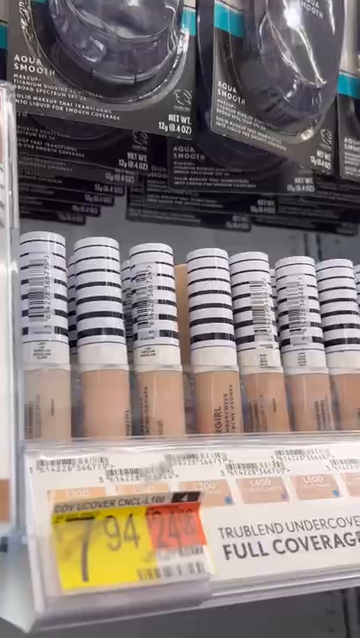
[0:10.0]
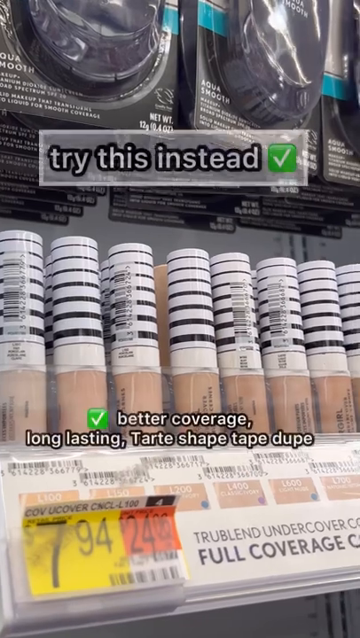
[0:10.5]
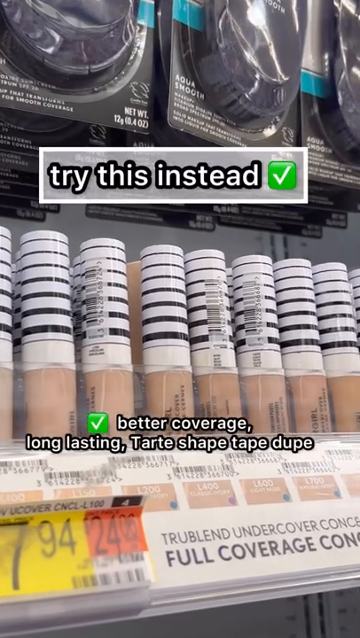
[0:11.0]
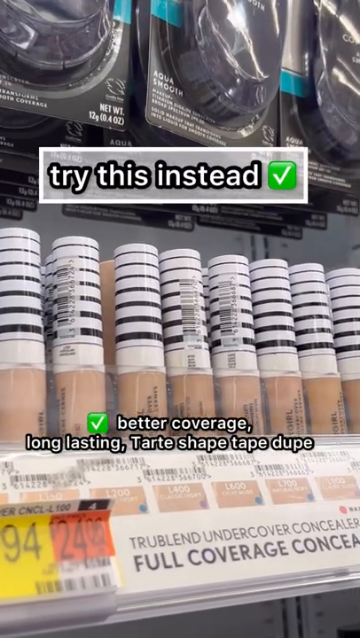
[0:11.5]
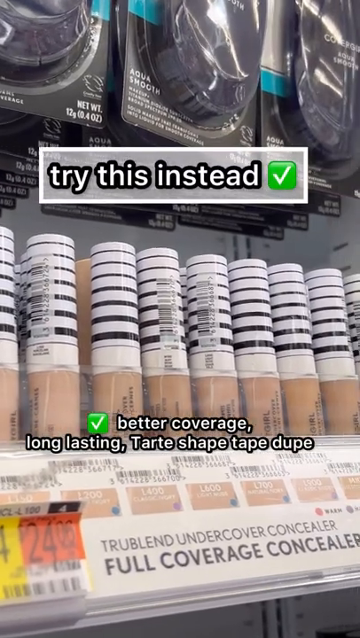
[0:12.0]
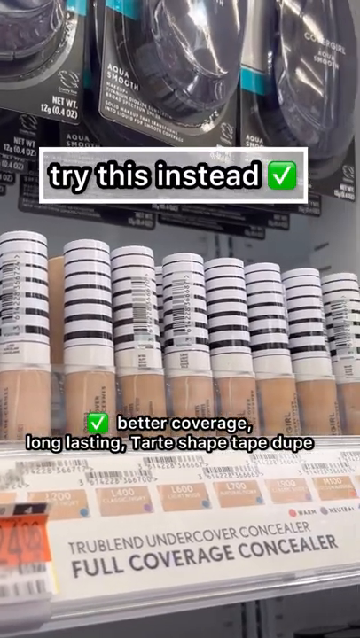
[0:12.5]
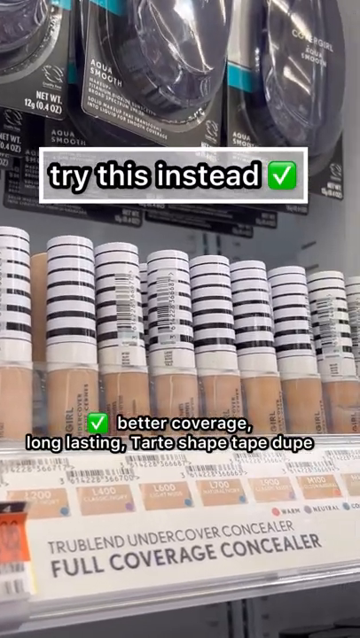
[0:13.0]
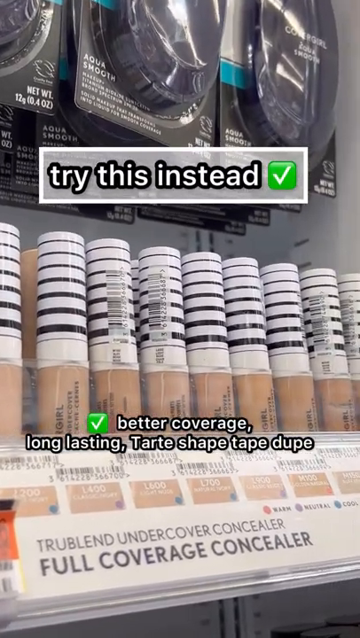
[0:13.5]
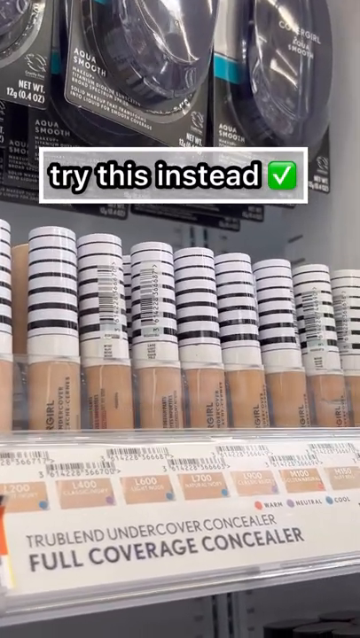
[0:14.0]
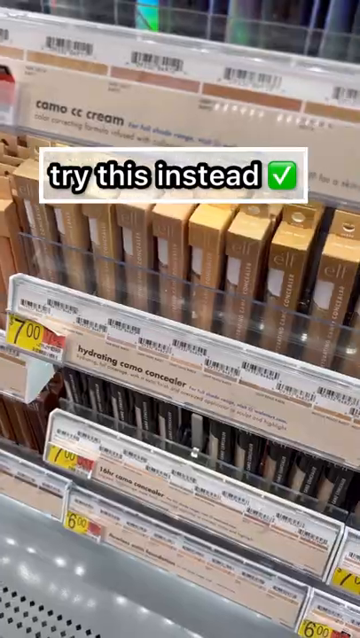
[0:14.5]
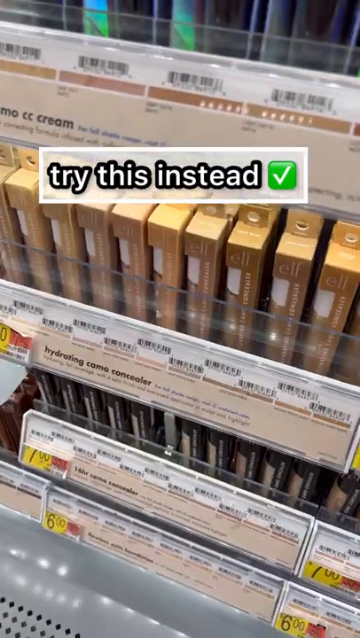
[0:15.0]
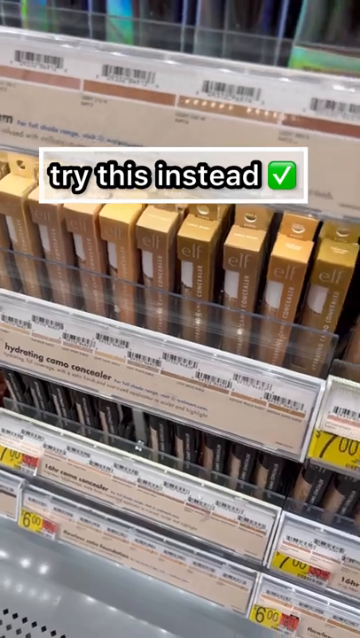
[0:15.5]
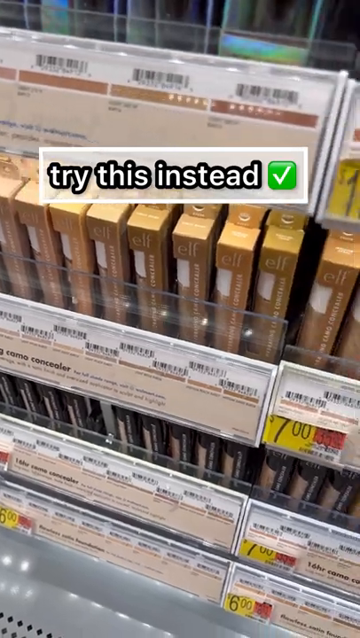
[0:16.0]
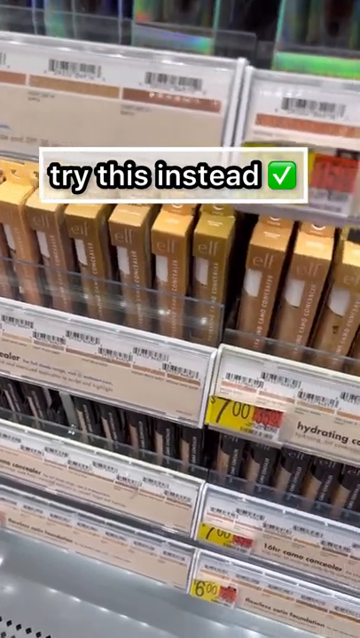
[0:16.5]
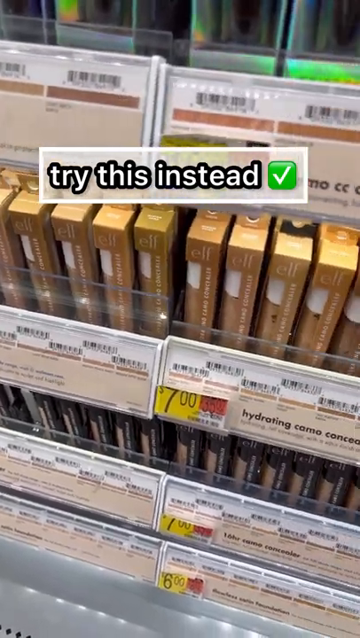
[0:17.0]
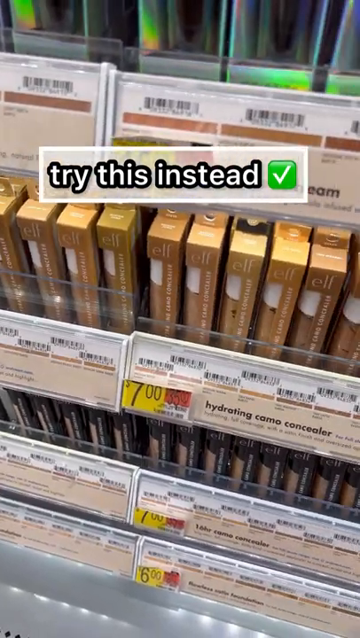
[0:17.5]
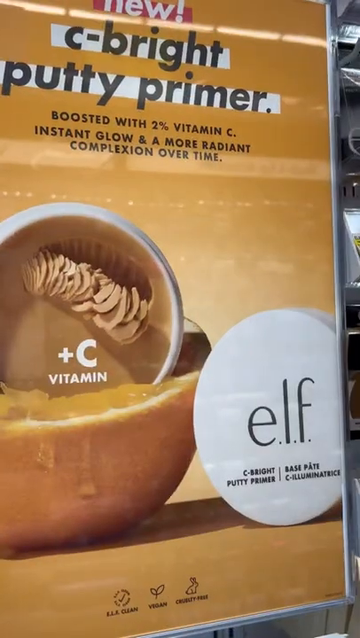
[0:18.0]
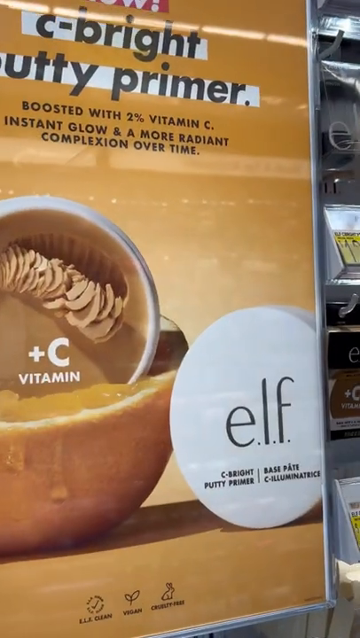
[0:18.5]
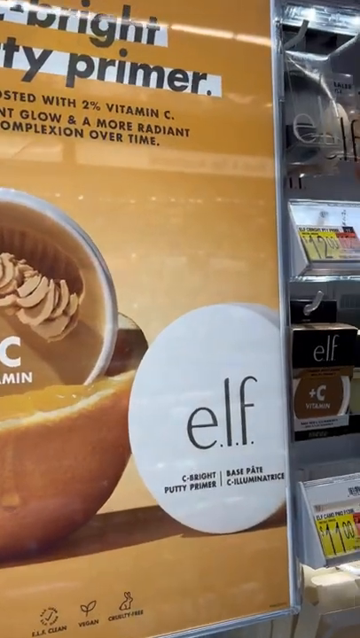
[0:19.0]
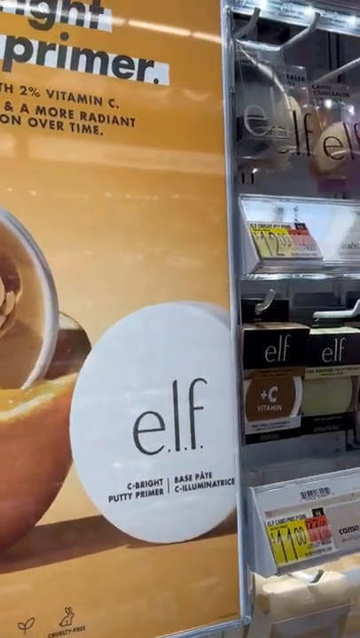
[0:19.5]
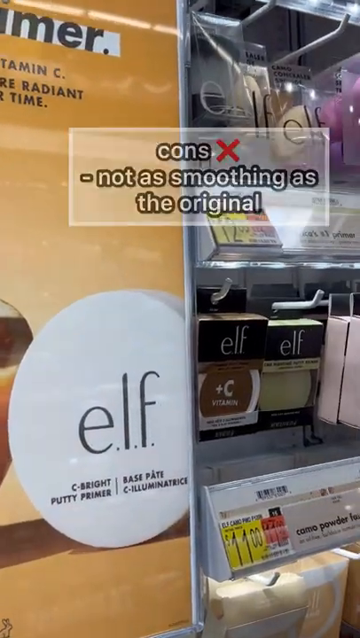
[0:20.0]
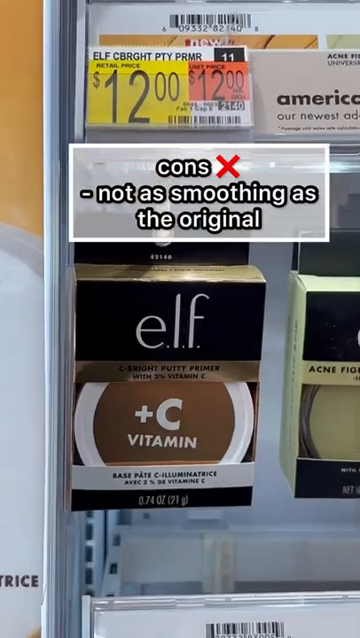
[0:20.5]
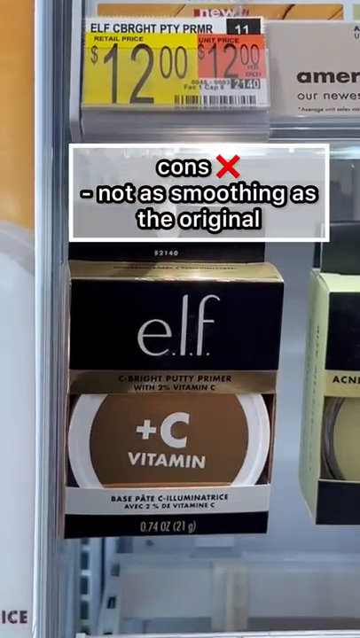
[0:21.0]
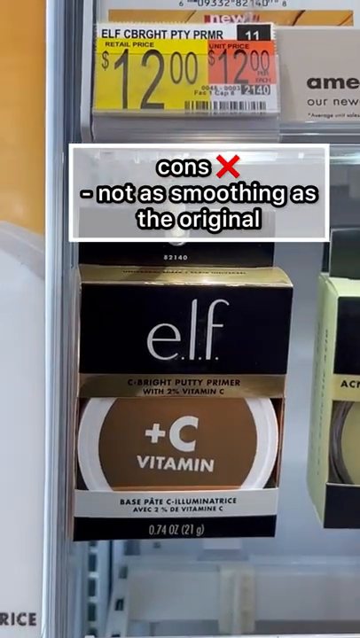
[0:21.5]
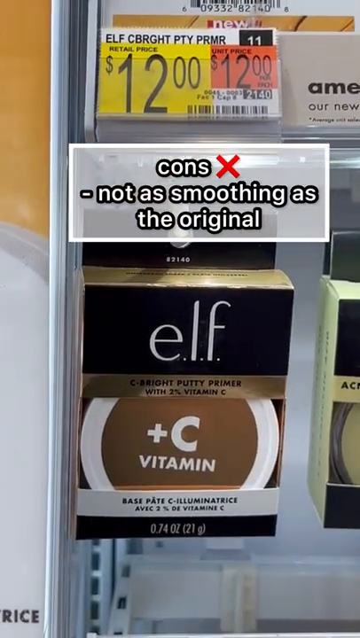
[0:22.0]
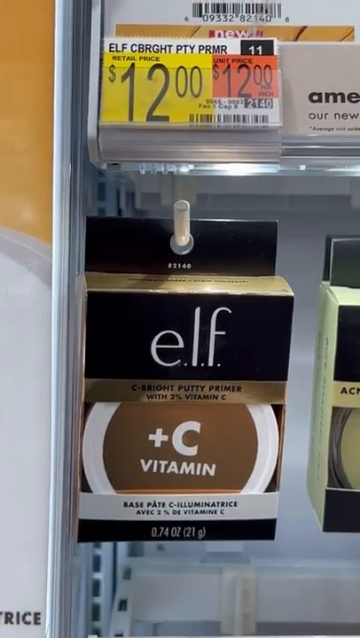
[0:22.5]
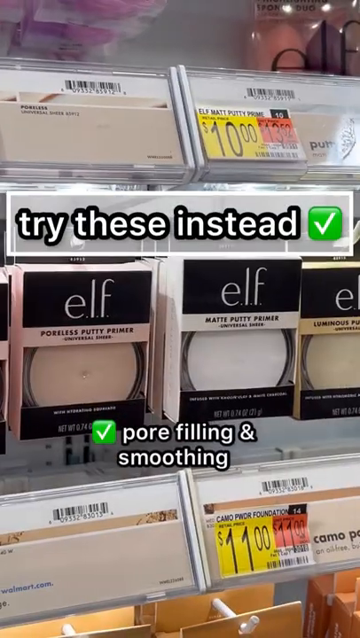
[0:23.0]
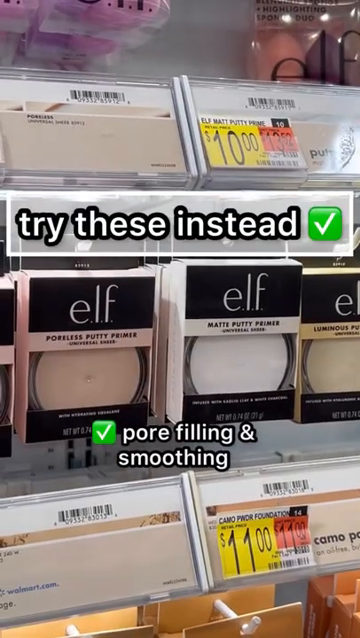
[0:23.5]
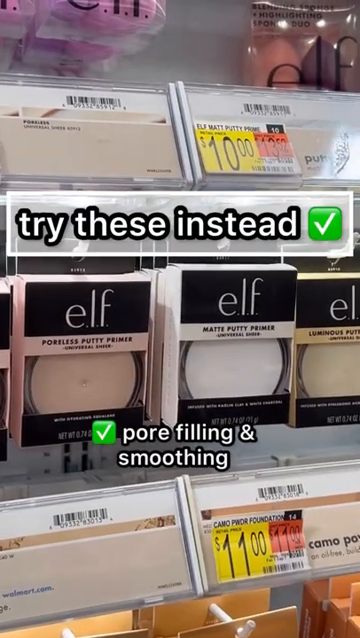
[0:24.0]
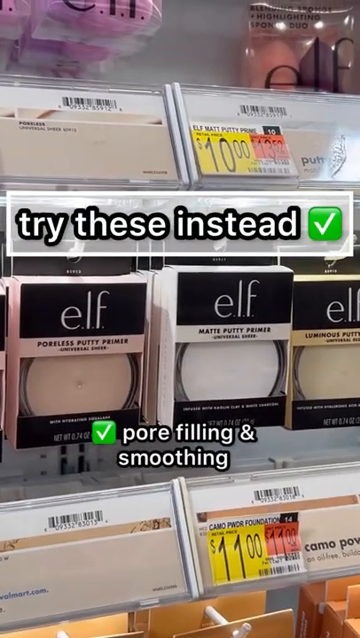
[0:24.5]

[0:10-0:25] A number of products, apparently foundations, are shown in very quick cuts that do not clearly show brand names or styles. ELF (Eyes, Lips, Face) briefly appears, along with a product that says "plus vitamin C." A full coverage concealer is shown, followed by a line of other concealers, and then beauty primers. Pros and cons are listed: pros such as a product being pore filling or a concealer having better coverage, and a con that a product is "not as smooth as the original," suggesting it may be a new product or a new formula of an existing one. Items in the drugstore makeup aisle are shown from a variety of angles, some from below looking up and some from above looking down, making it hard to read exactly which products are being focused on.